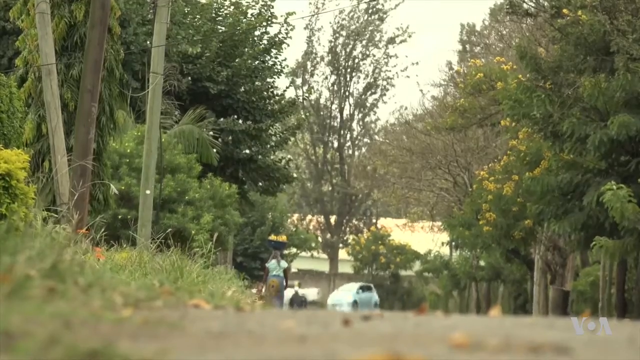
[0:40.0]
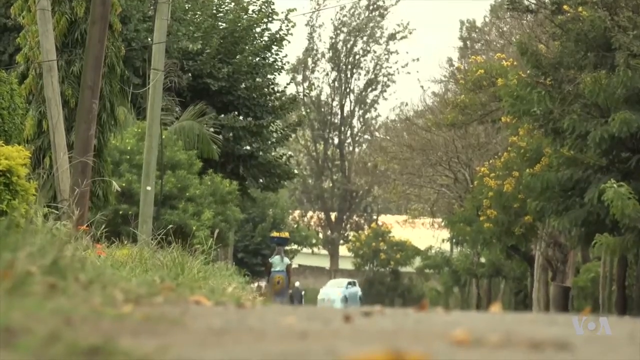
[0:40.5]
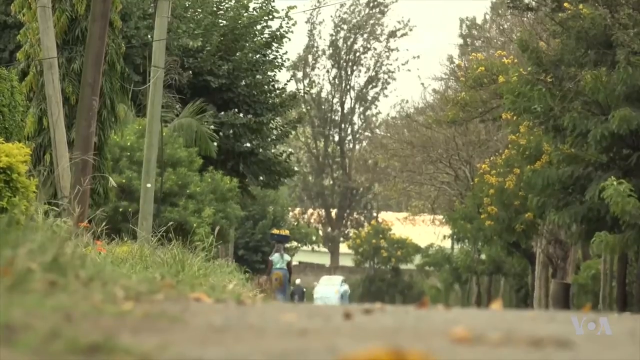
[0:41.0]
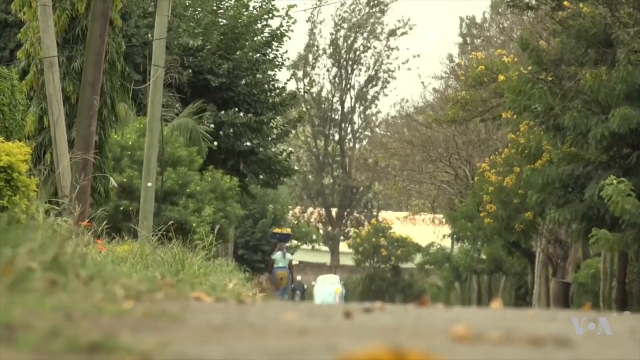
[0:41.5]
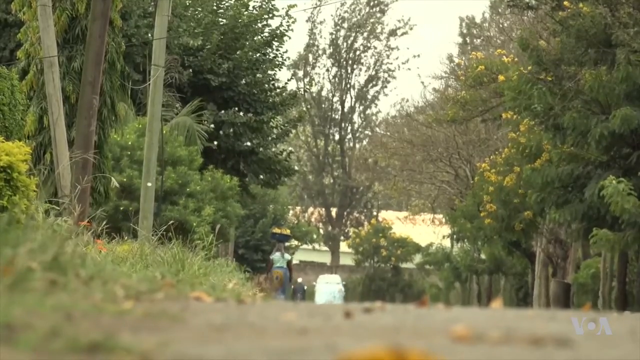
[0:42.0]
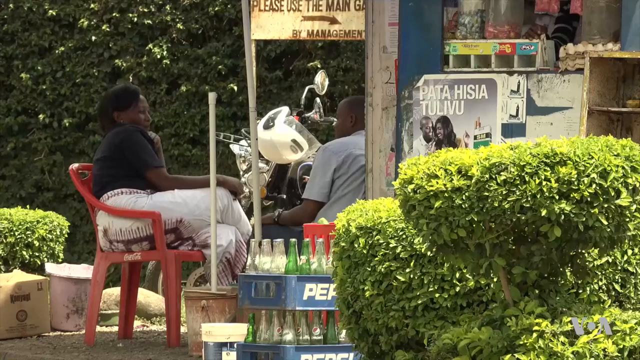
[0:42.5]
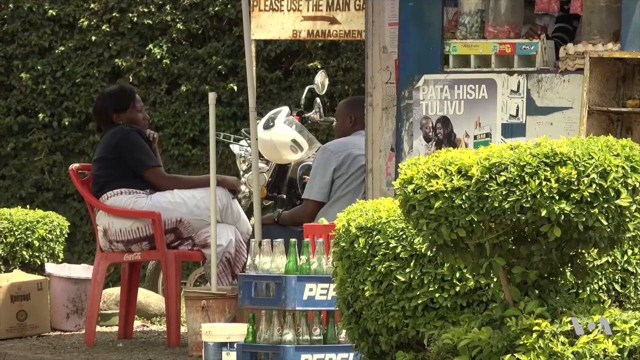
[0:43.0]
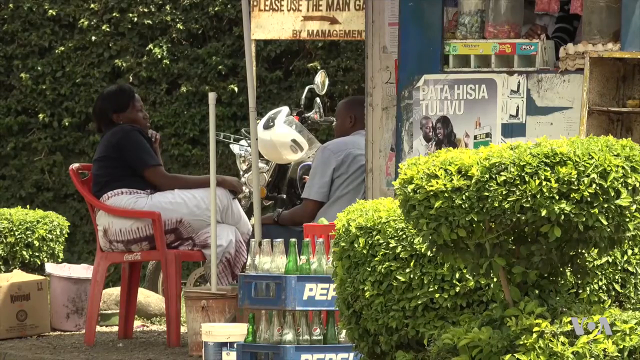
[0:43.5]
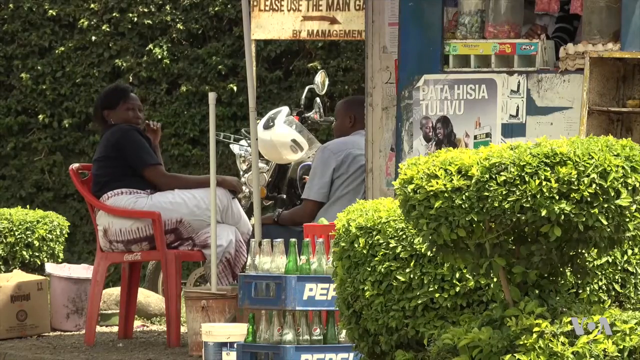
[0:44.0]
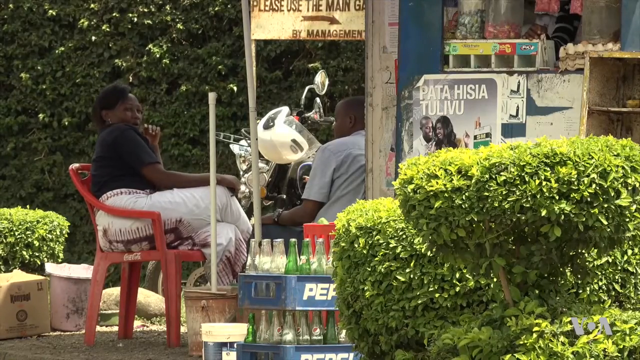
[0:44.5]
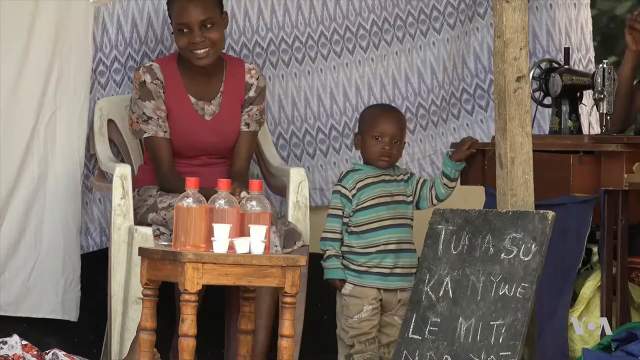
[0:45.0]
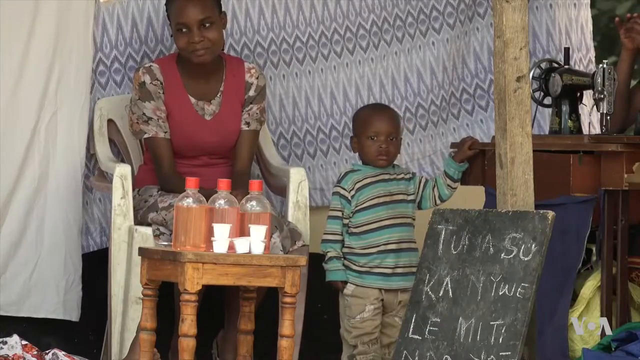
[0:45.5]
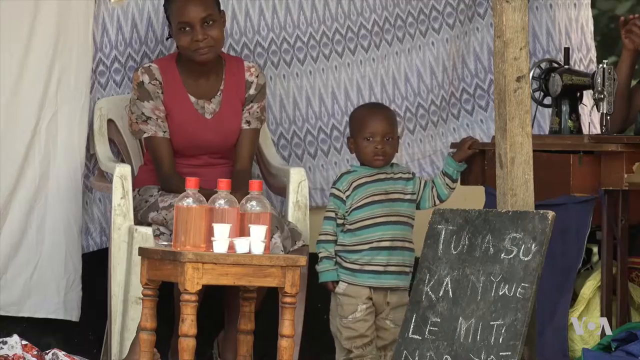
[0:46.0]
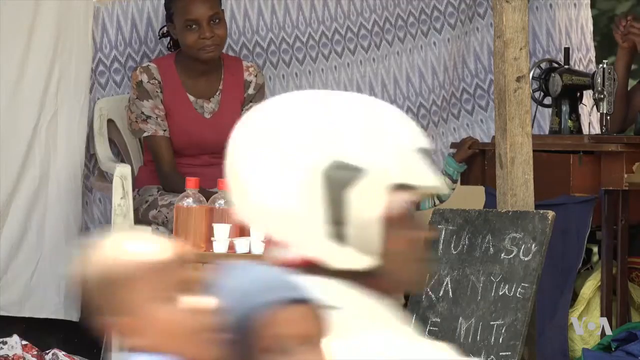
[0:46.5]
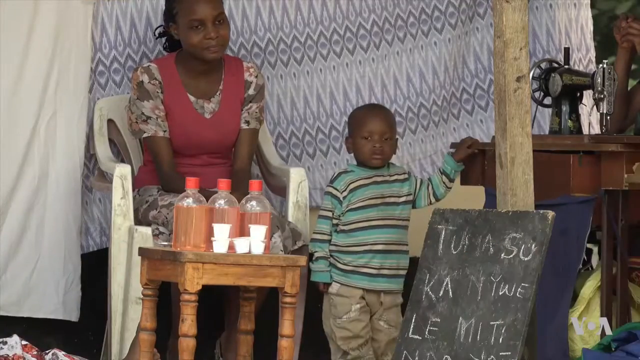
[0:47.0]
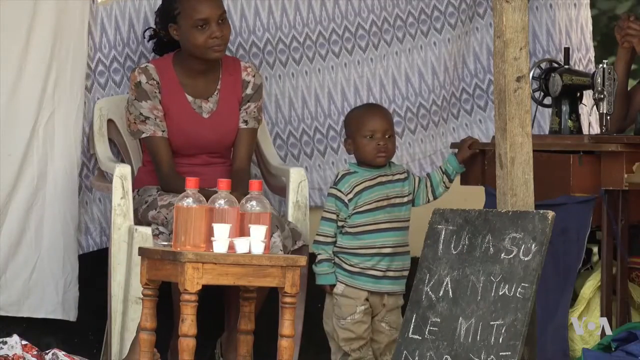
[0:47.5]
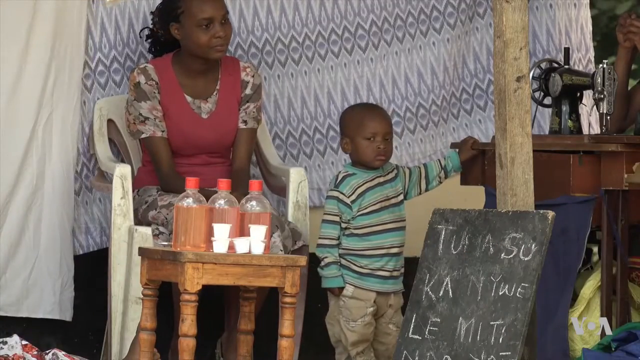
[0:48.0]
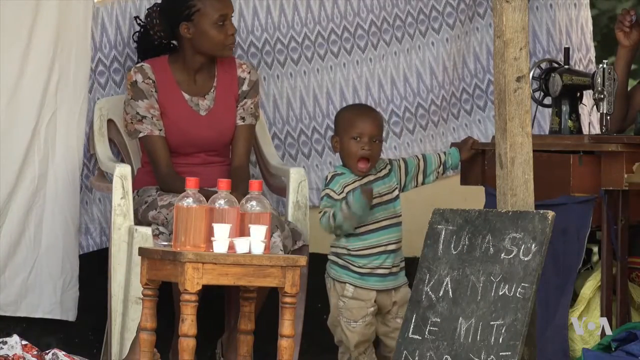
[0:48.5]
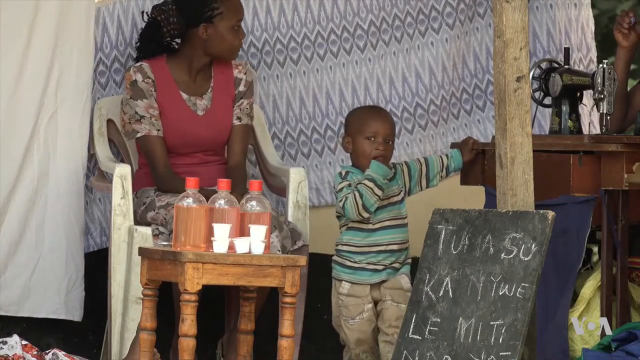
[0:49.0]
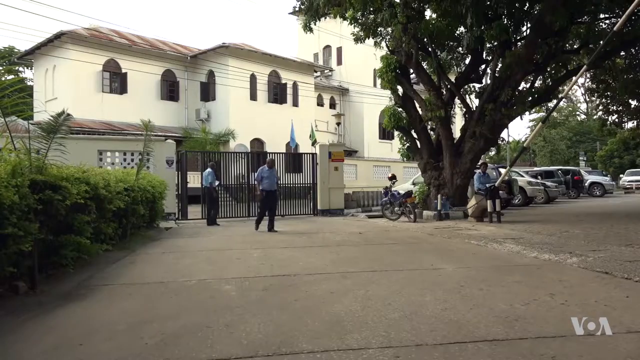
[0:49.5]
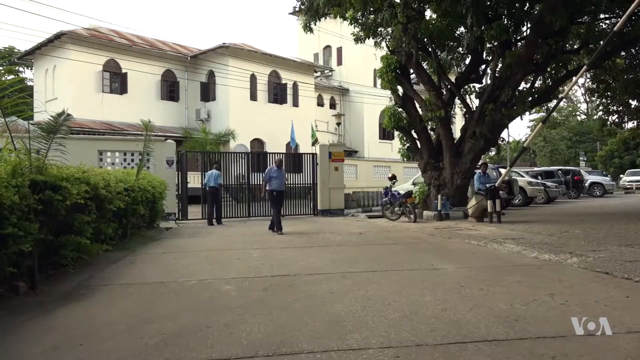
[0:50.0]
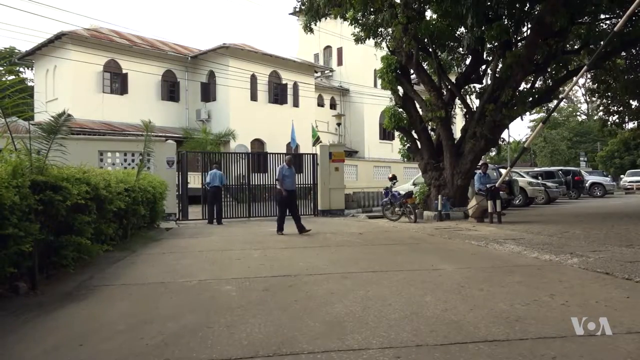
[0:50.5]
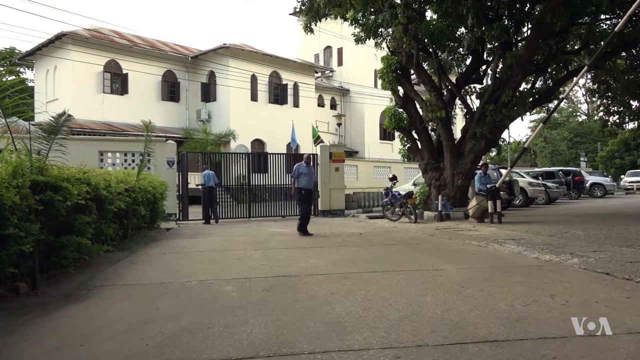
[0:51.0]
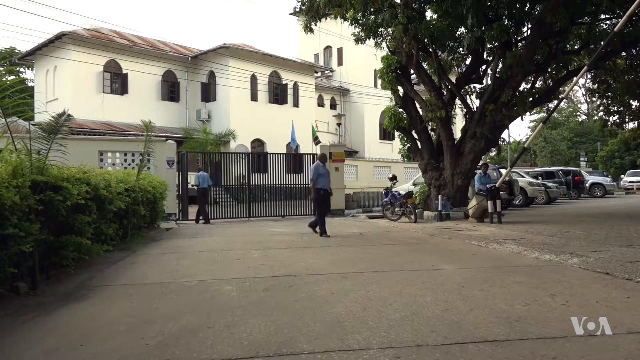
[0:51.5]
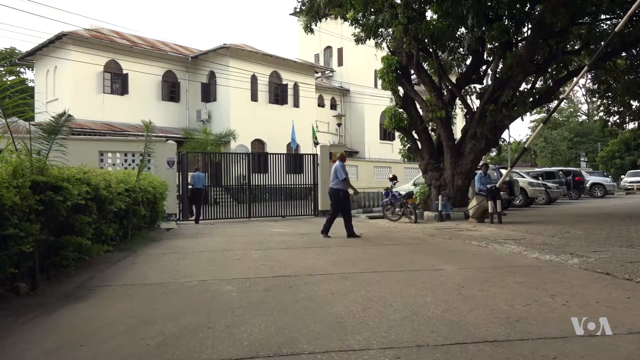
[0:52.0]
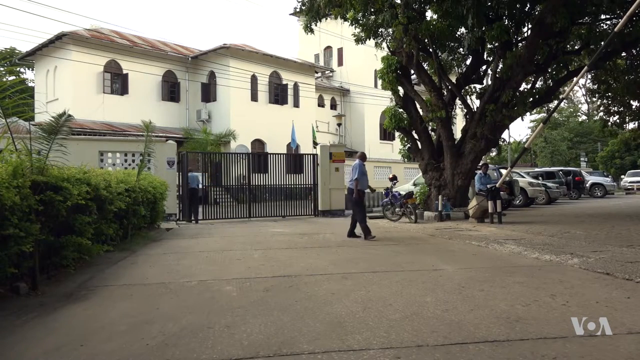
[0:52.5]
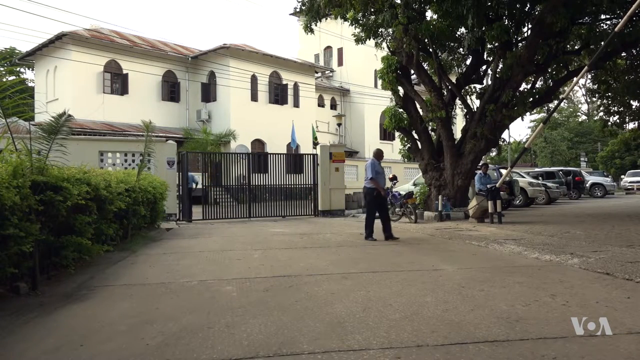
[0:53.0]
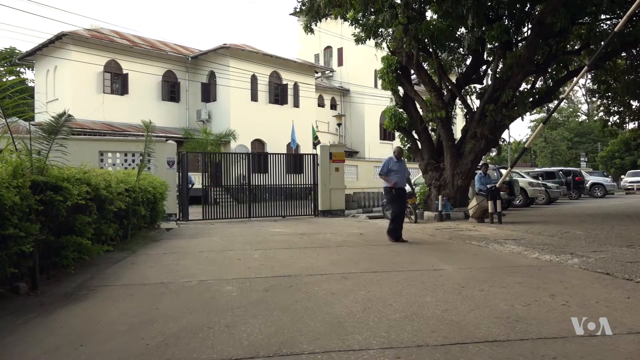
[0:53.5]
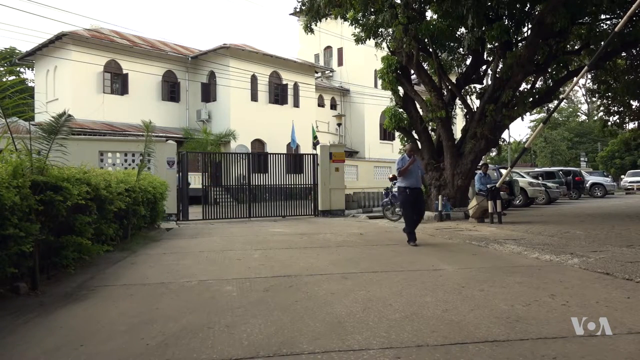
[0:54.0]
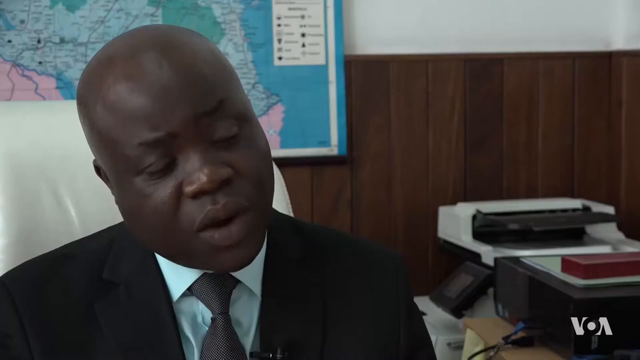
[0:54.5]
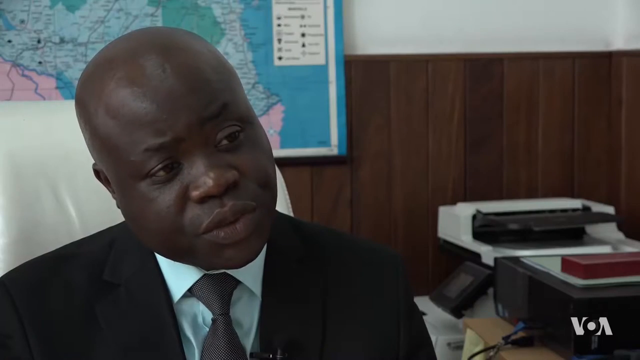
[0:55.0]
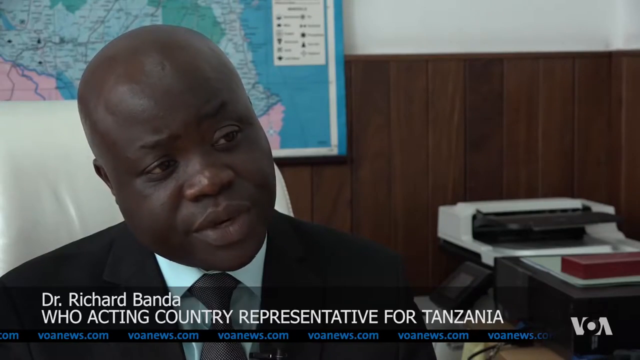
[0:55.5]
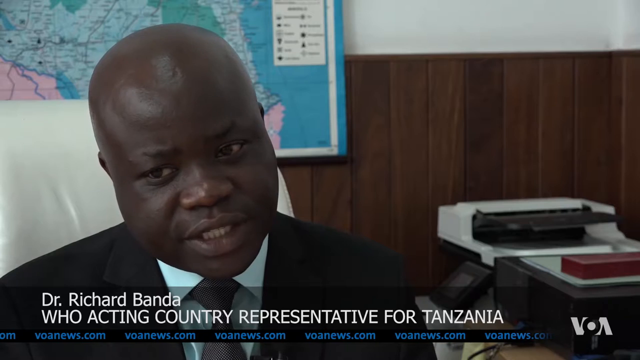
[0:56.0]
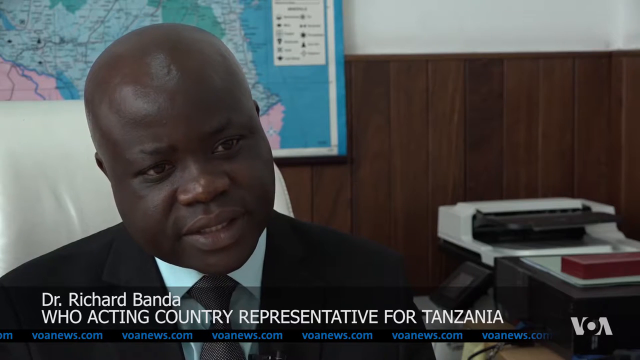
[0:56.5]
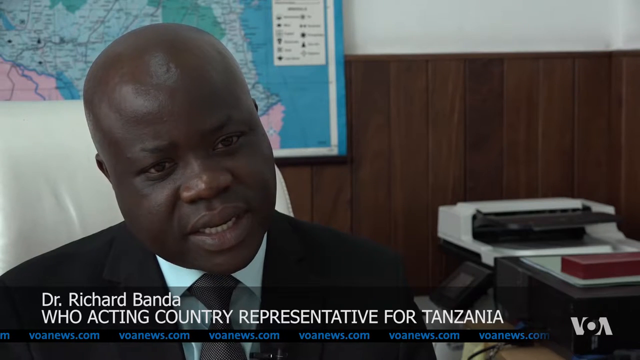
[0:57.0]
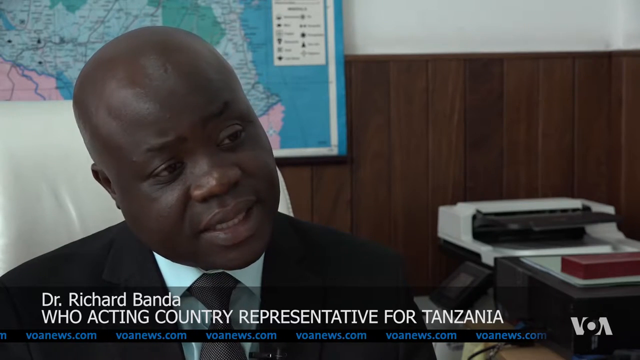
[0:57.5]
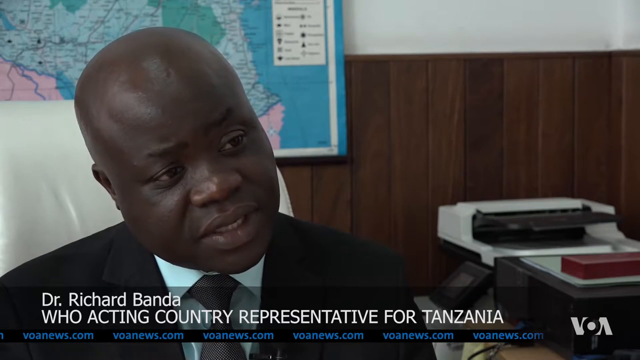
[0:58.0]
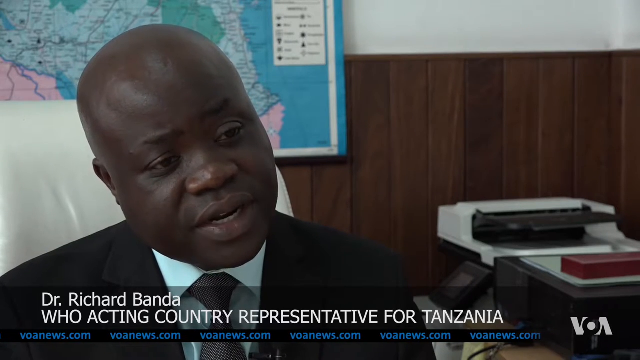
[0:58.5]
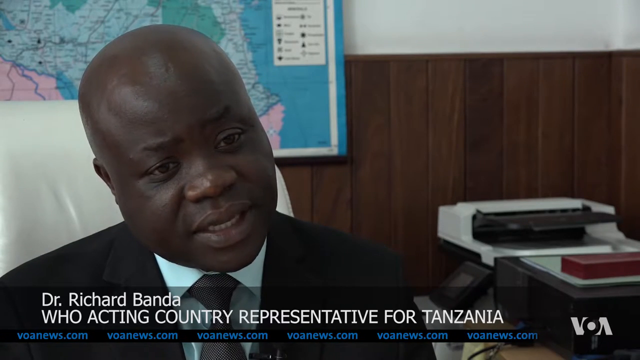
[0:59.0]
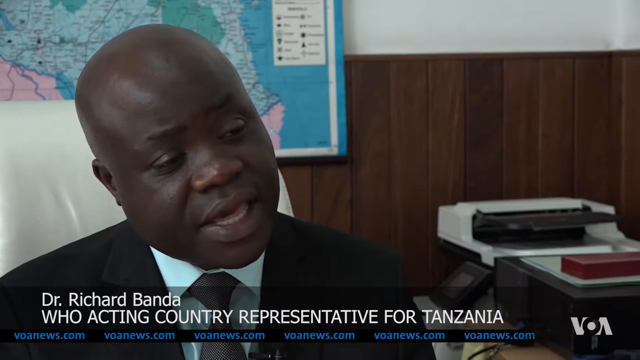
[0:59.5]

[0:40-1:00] An outdoor view shows a street where someone walks with what looks like something on their head, like a bag of food. A couple of people lounge around talking with each other. The video cuts to another place that looks like some sort of juice sale, with a little child in front and, apparently, his mother behind him. She wears what seems to be a red apron with a flowery undershirt. In front is a chalkboard-type menu written in chalk in a foreign language. Next, a group of police officers is stationed outside a big, mansion-like place. Then a man named Dr. Richard Bonda is interviewed.